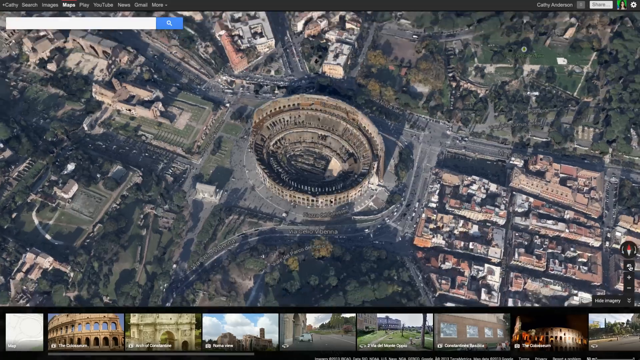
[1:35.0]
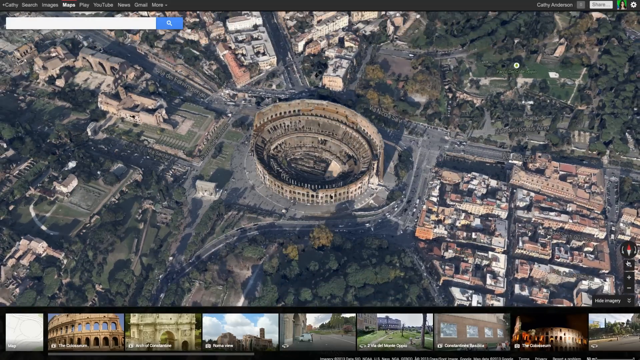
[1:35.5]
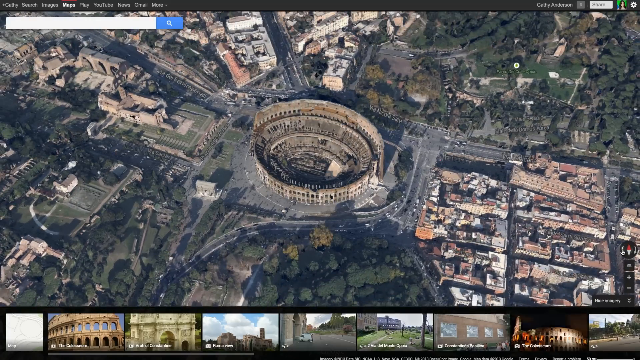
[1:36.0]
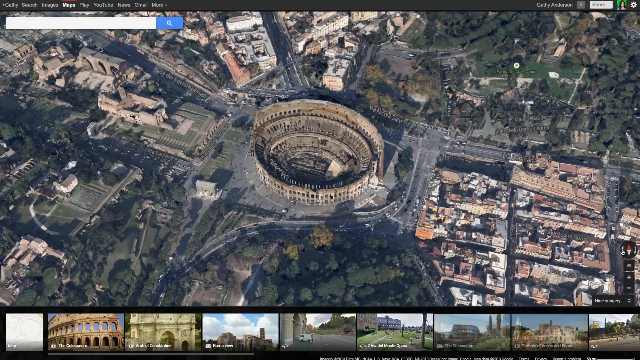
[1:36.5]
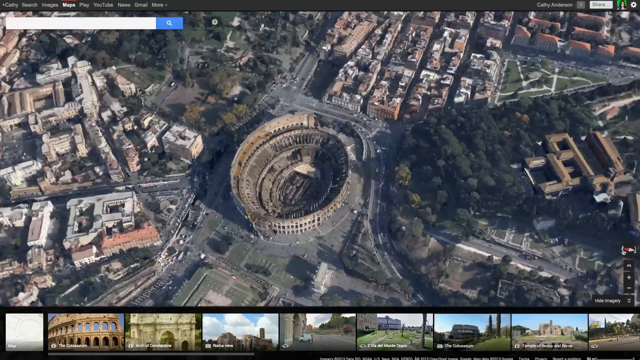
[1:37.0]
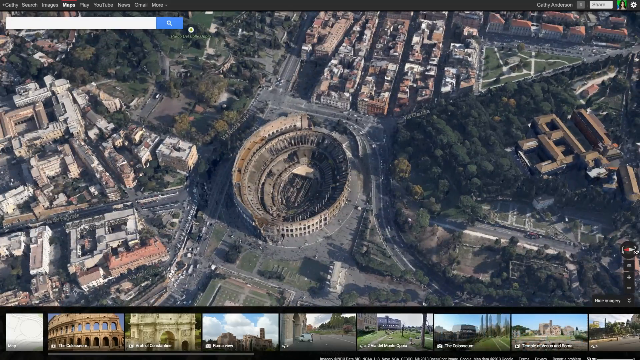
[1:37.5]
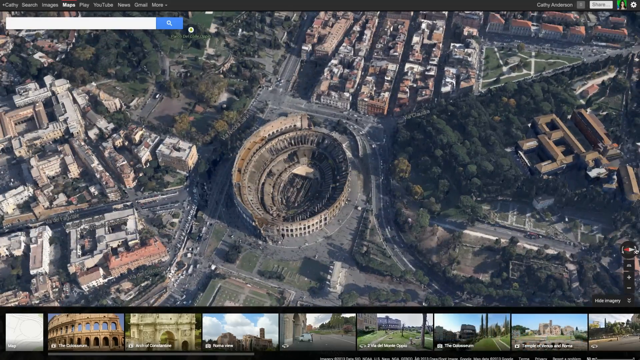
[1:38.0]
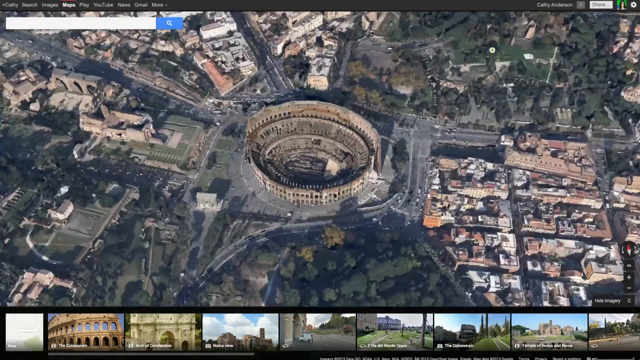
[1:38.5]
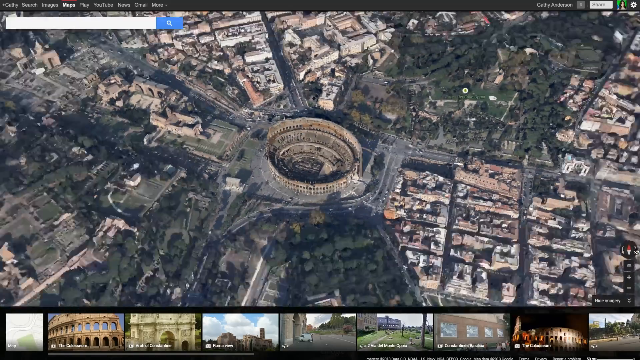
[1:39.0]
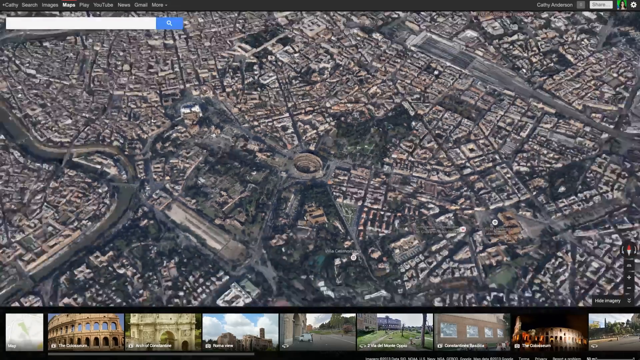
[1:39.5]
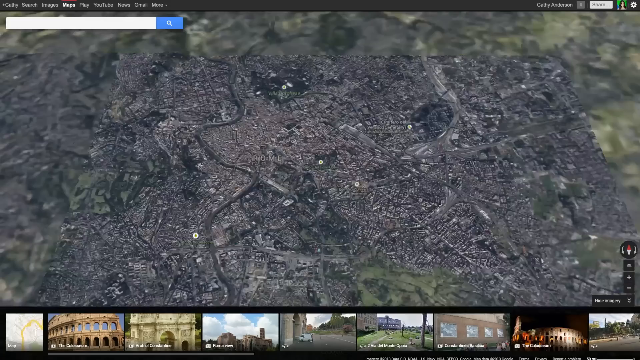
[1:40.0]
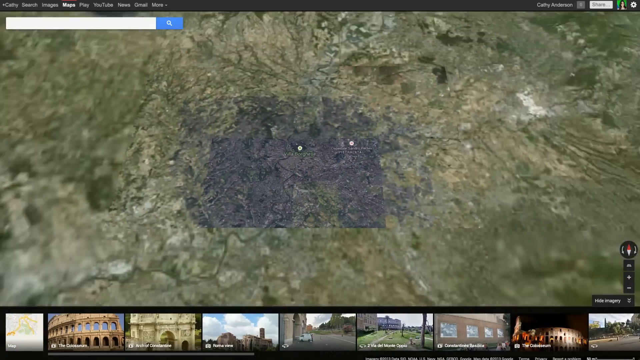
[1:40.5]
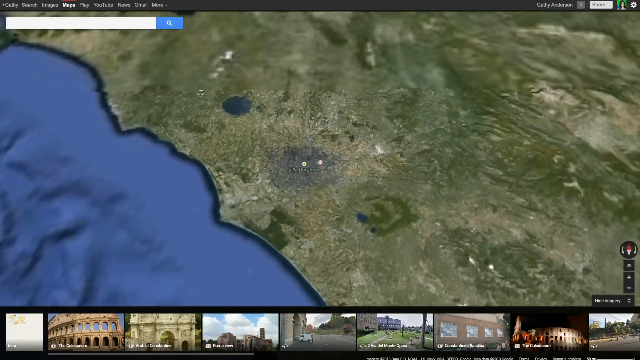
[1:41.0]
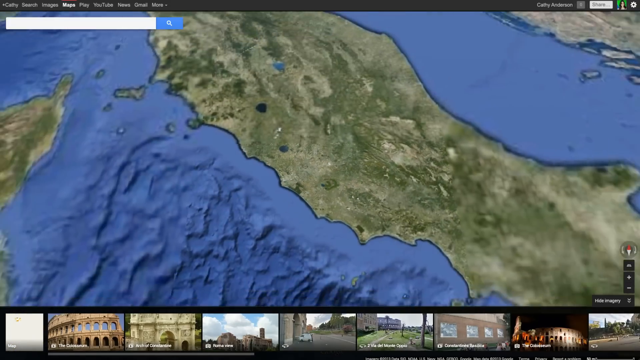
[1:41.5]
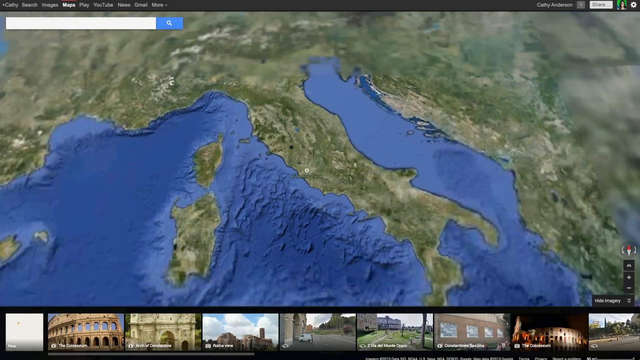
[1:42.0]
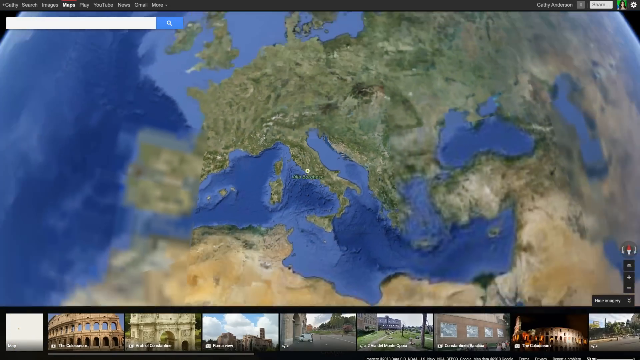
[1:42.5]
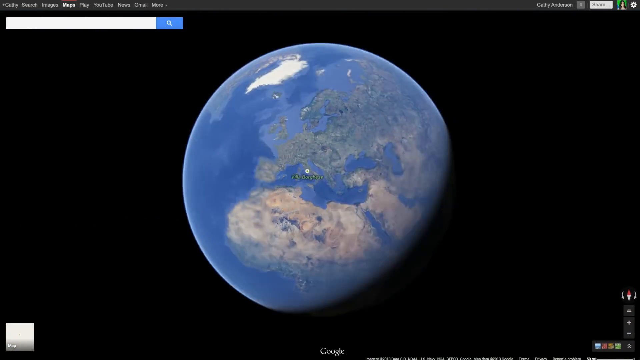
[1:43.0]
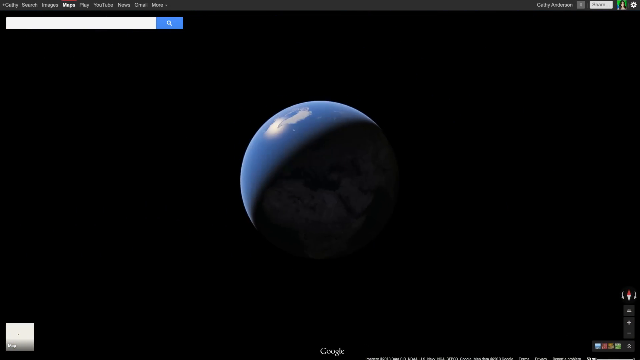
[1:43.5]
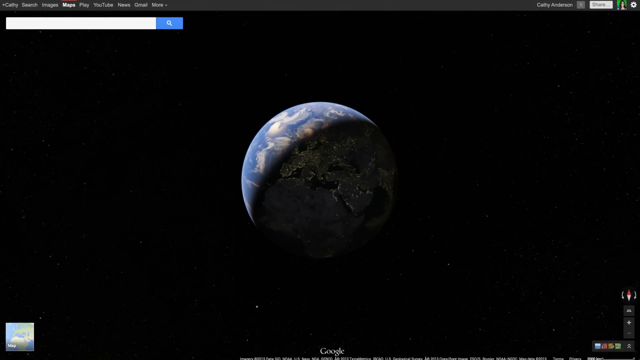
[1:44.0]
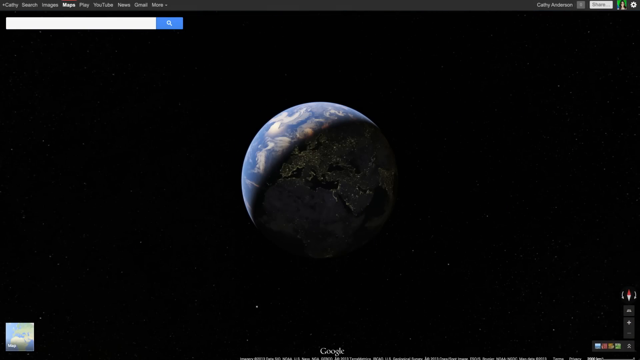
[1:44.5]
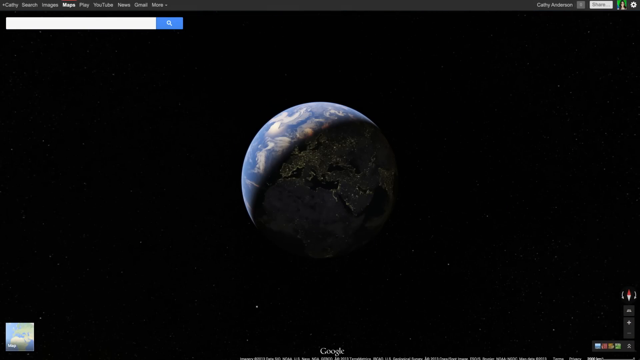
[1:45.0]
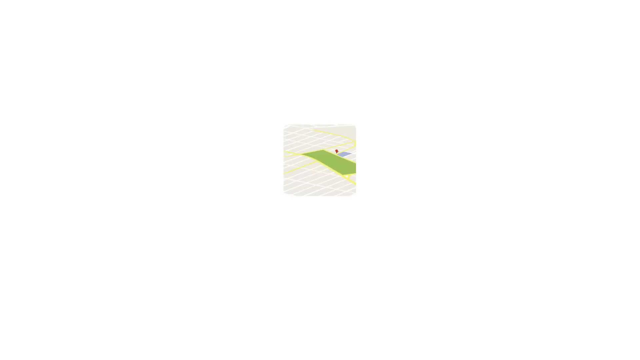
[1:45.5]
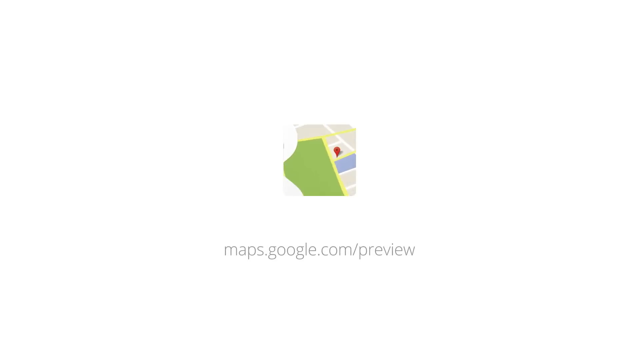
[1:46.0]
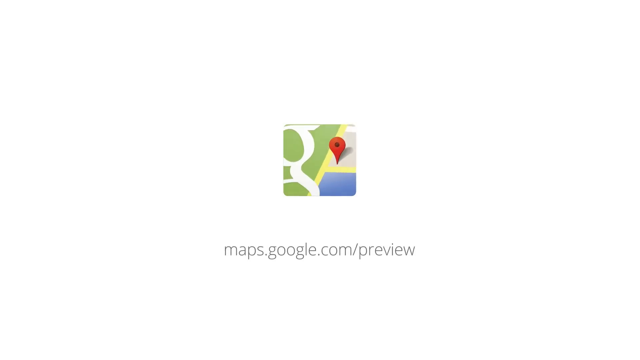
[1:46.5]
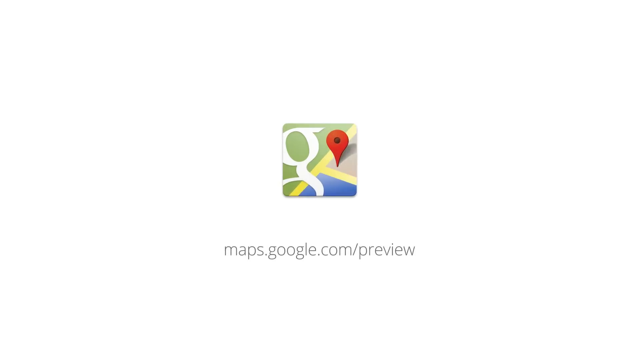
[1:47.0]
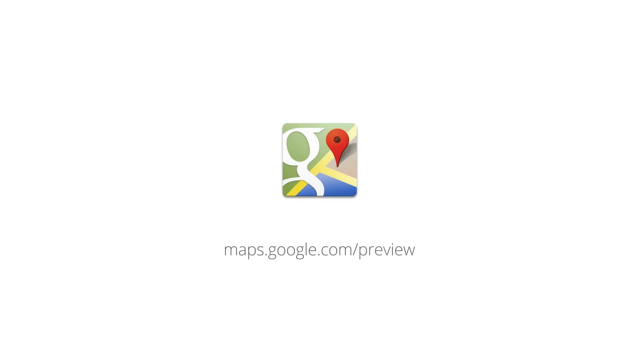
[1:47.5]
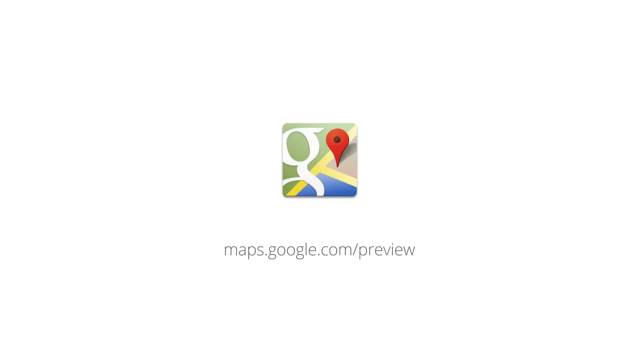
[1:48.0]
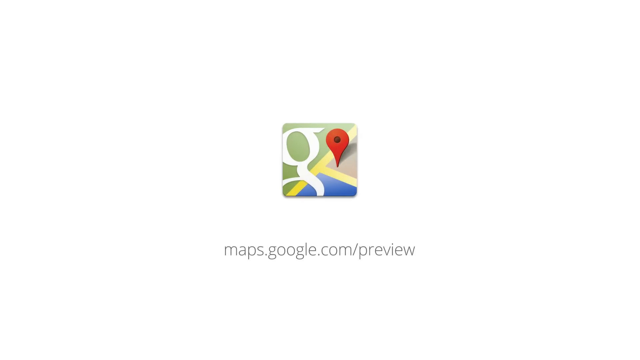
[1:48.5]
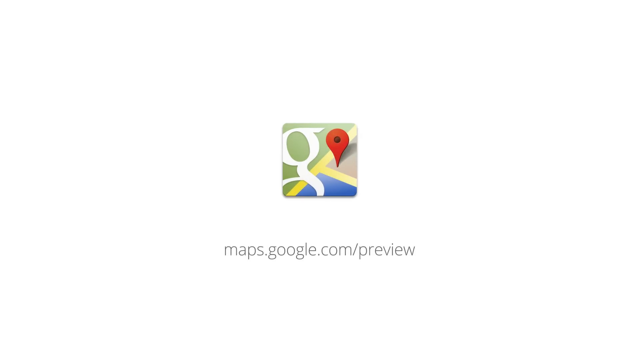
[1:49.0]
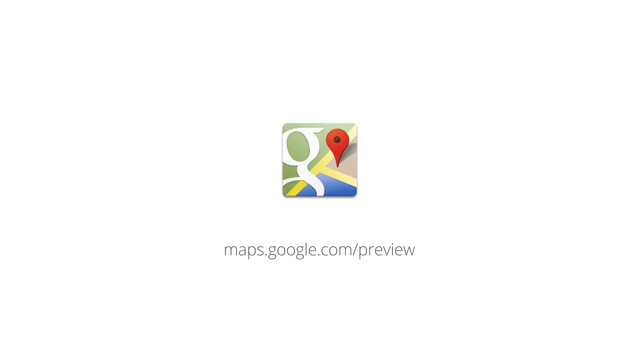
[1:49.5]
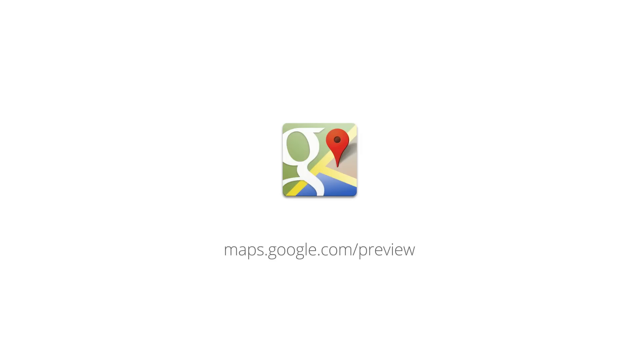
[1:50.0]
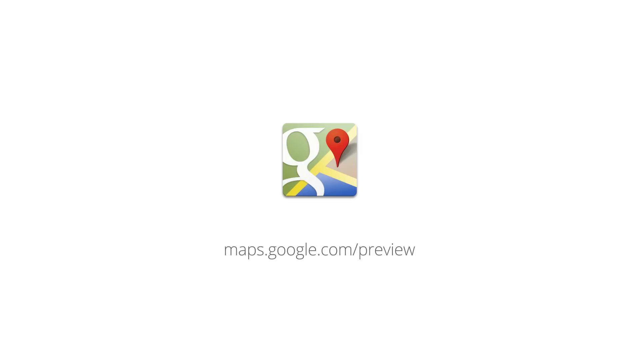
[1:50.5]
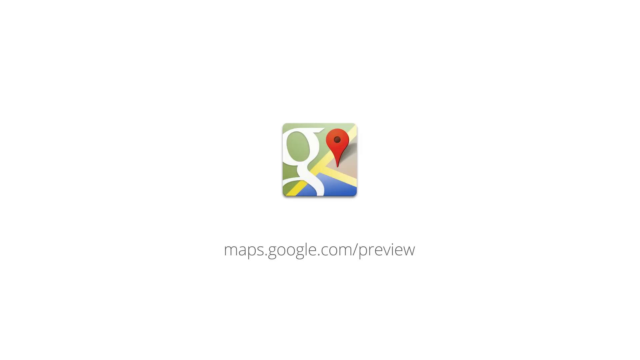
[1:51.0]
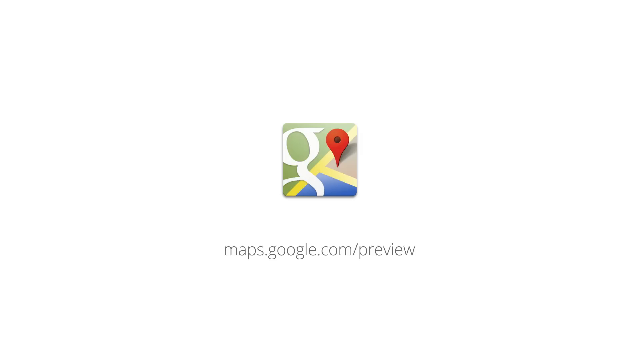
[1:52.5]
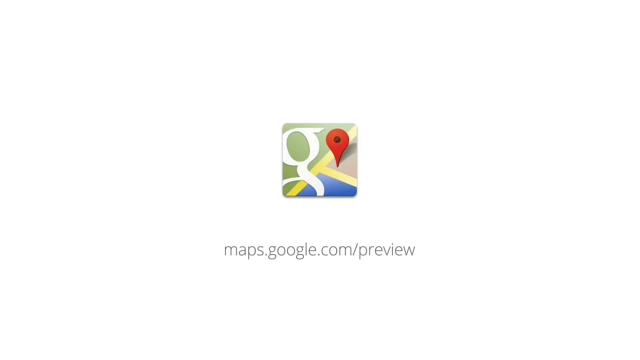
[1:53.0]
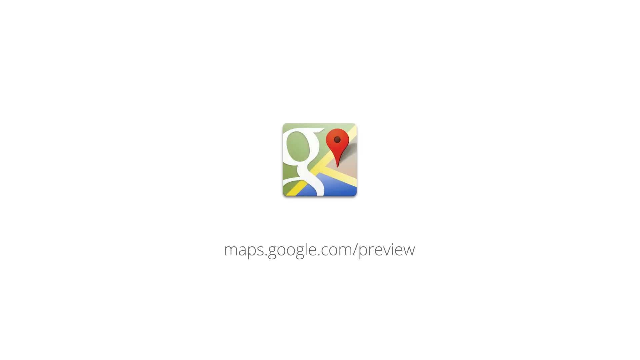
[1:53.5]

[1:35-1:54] The view zooms around the Colosseum; the person zooms in on it and kind of rotates it around. Eventually they zoom all the way out, back from Italy to where Europe and Africa are visible, and then the whole Earth. The planet is seen from Europe, with Europe, Africa, and a bit of Asia visible and black space all around it. City lights appear, apparently where the populated areas are, as they zoom all the way out to space. The last thing shown is "maps.google.com/preview" with the Google Maps icon on a white background, suggesting it is some kind of advertisement.